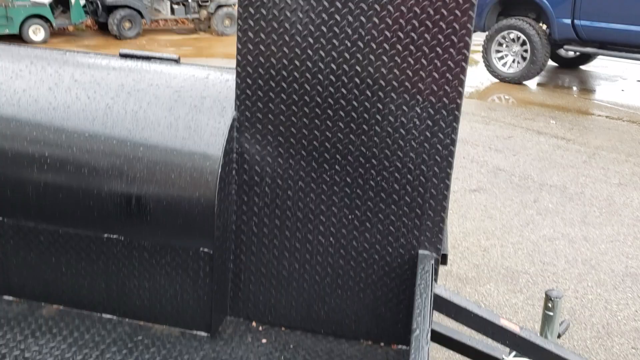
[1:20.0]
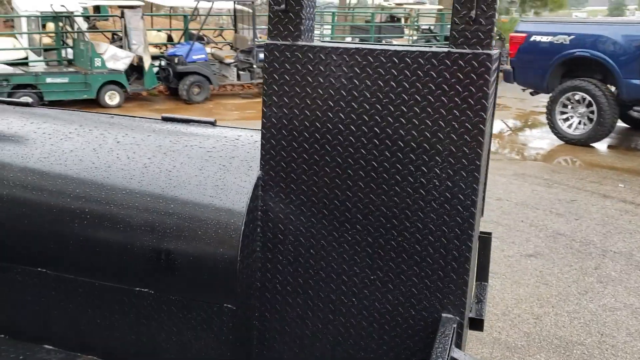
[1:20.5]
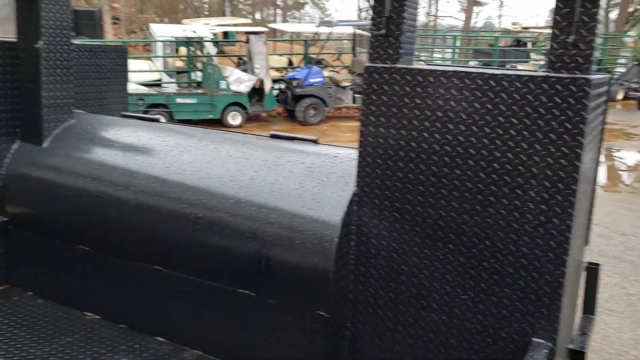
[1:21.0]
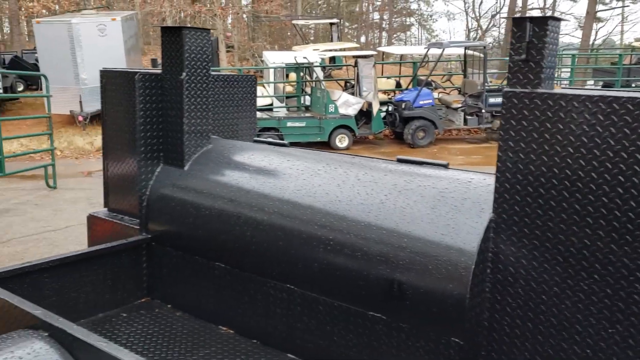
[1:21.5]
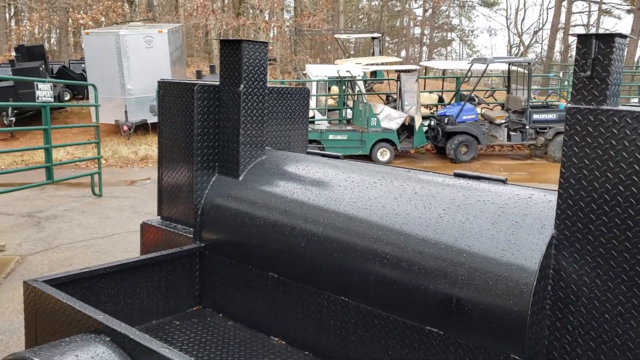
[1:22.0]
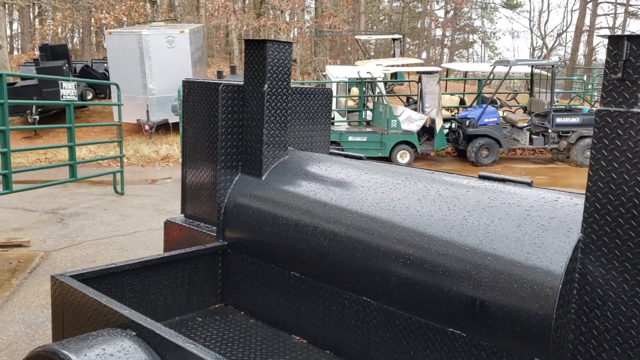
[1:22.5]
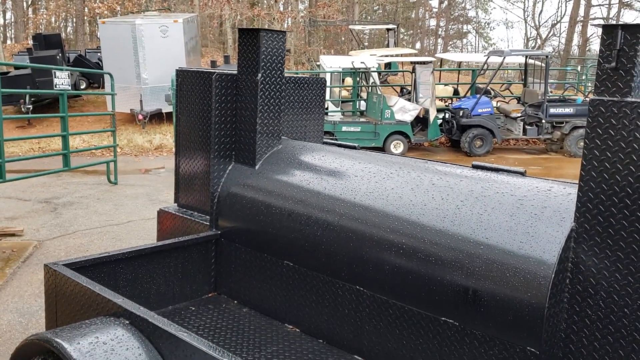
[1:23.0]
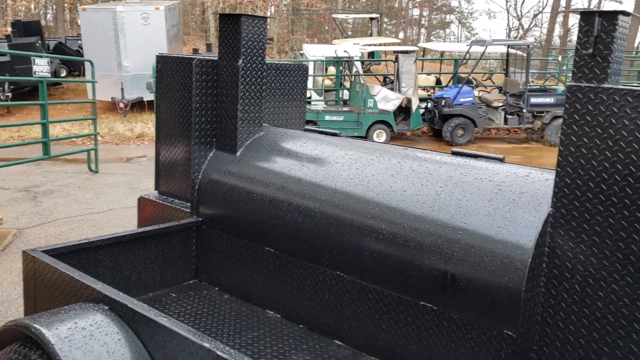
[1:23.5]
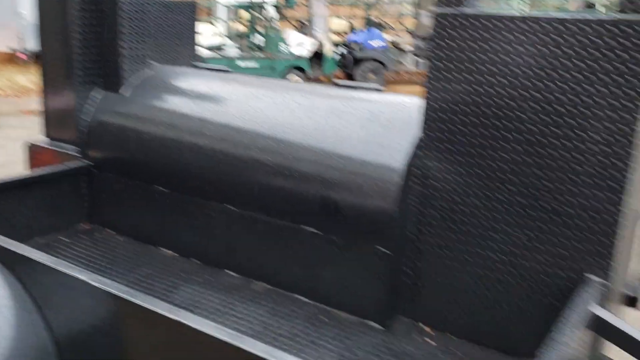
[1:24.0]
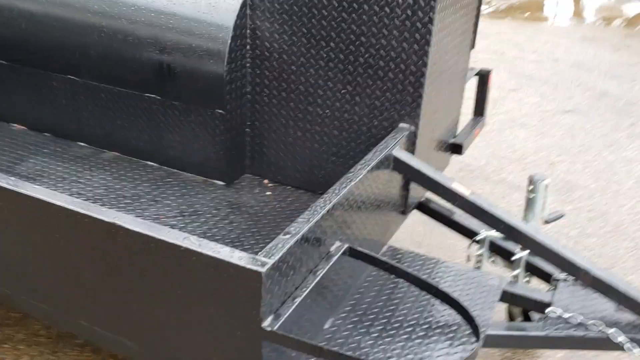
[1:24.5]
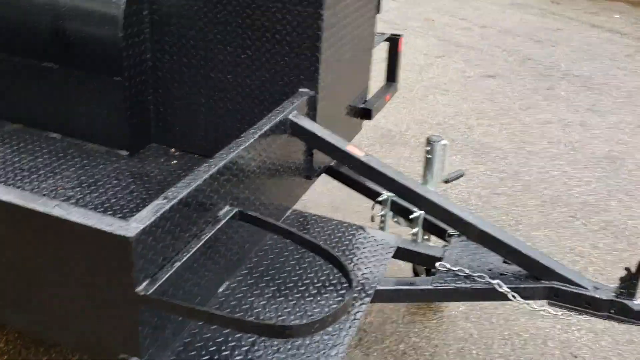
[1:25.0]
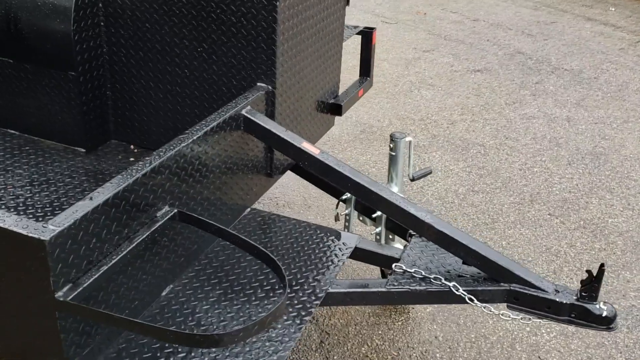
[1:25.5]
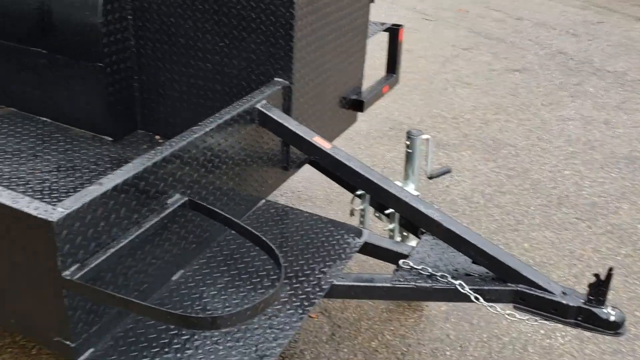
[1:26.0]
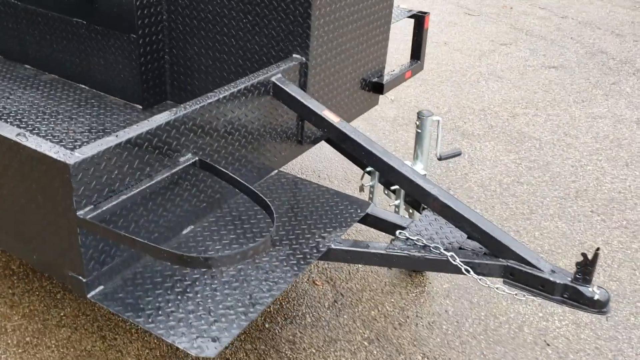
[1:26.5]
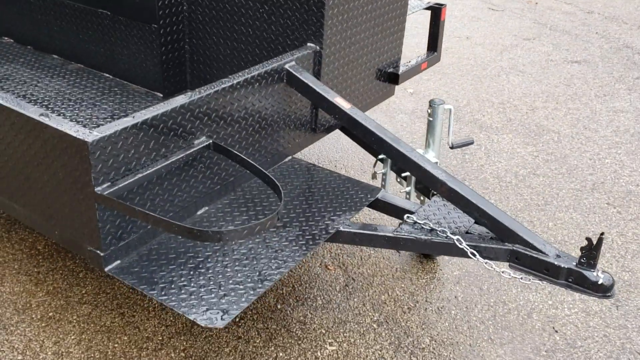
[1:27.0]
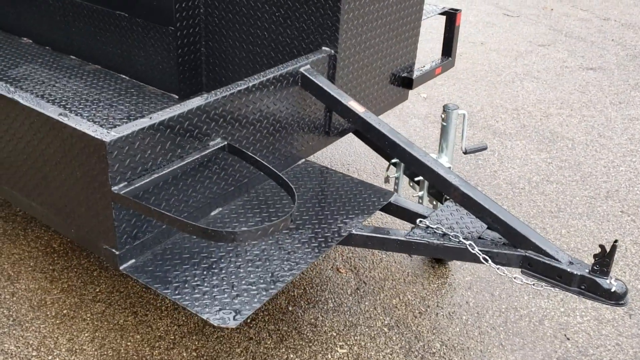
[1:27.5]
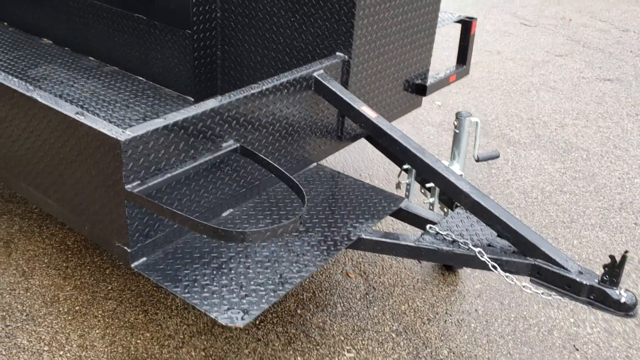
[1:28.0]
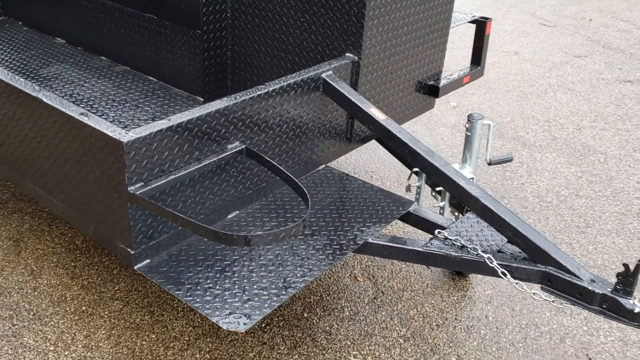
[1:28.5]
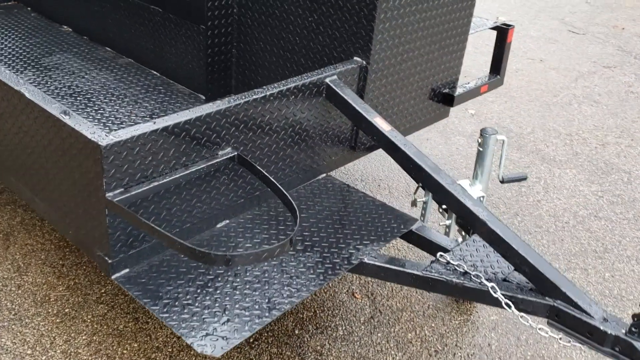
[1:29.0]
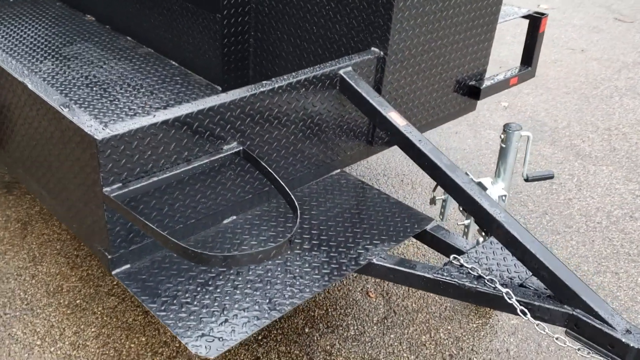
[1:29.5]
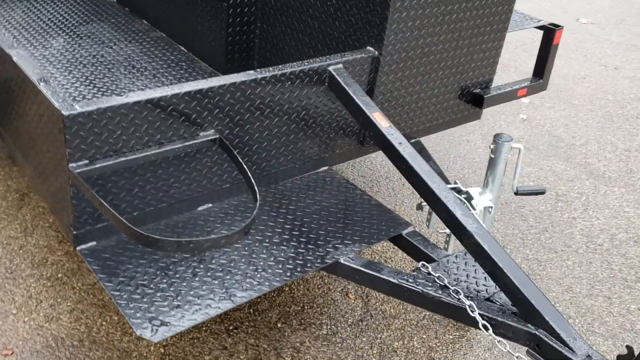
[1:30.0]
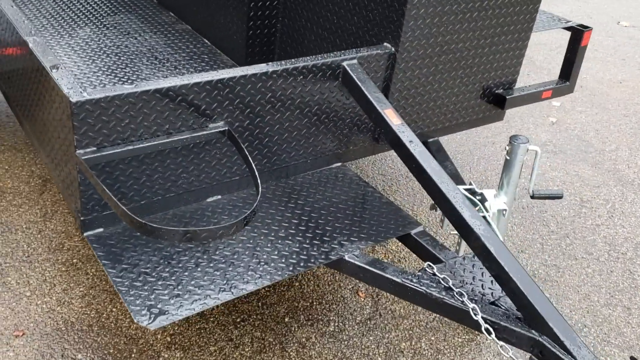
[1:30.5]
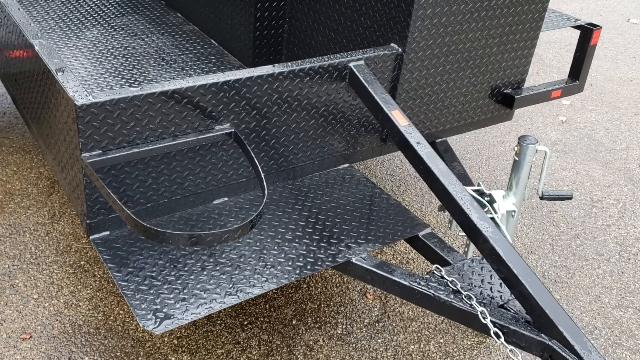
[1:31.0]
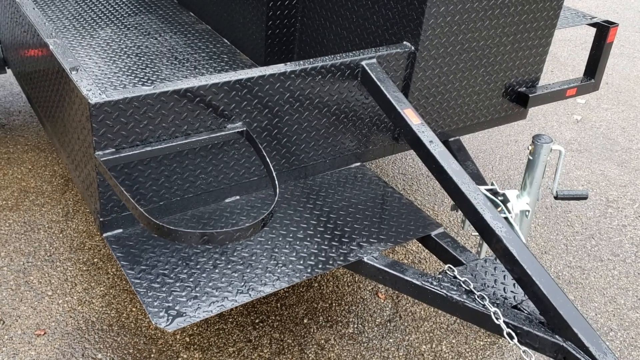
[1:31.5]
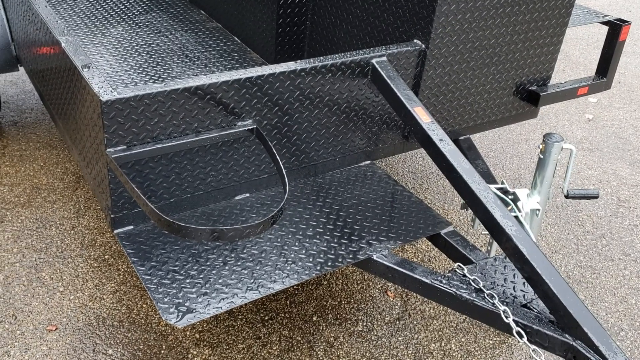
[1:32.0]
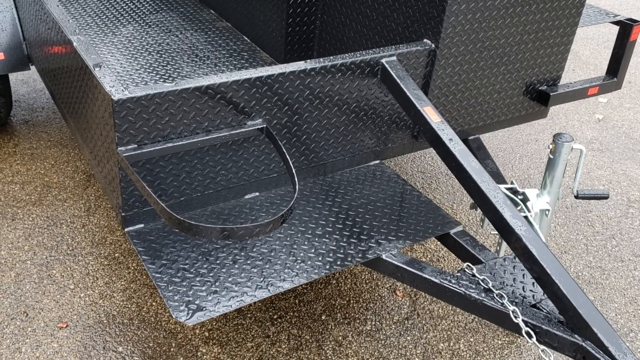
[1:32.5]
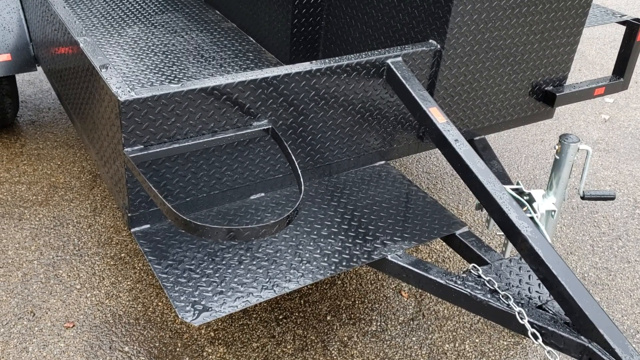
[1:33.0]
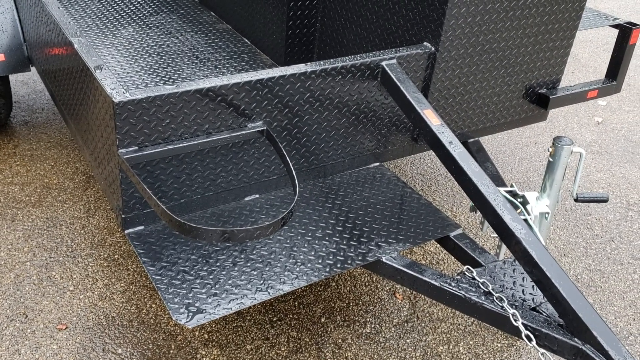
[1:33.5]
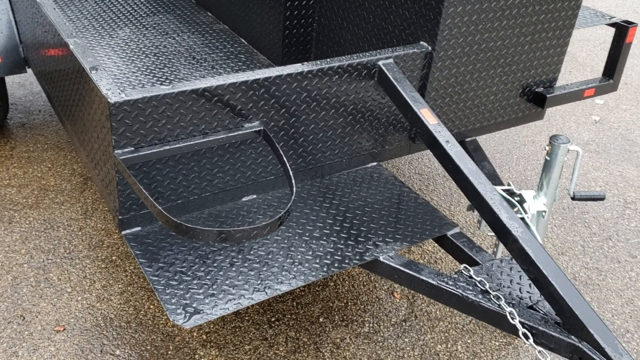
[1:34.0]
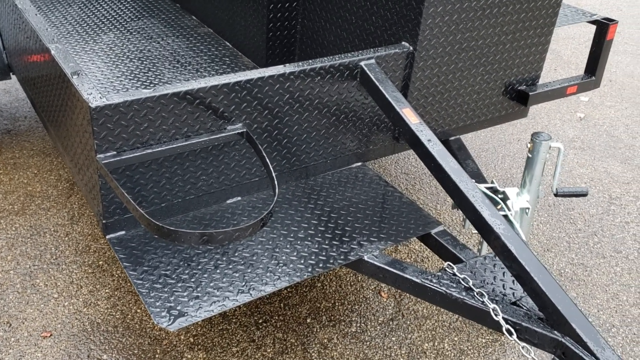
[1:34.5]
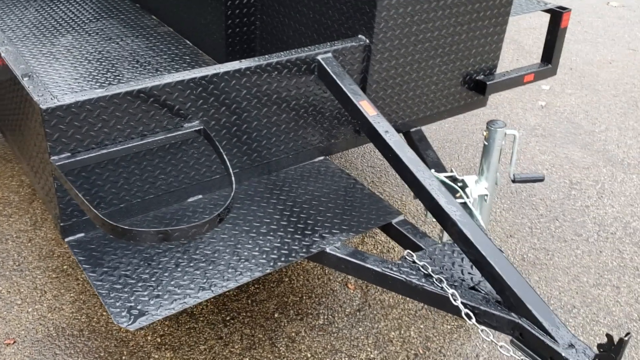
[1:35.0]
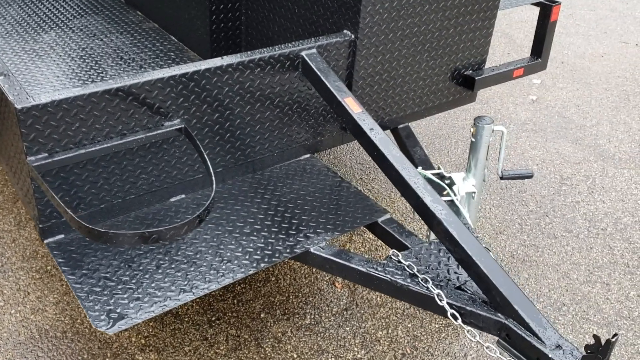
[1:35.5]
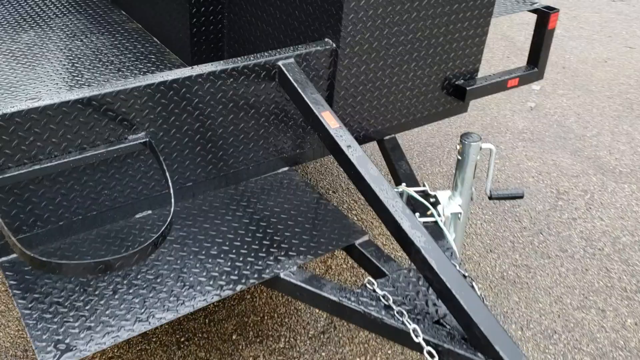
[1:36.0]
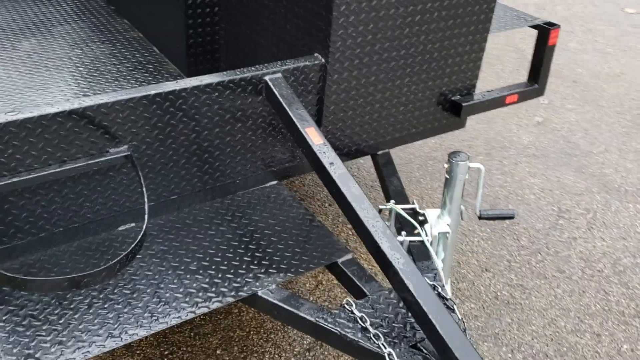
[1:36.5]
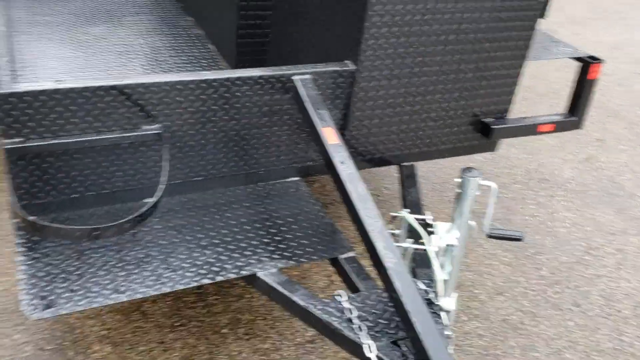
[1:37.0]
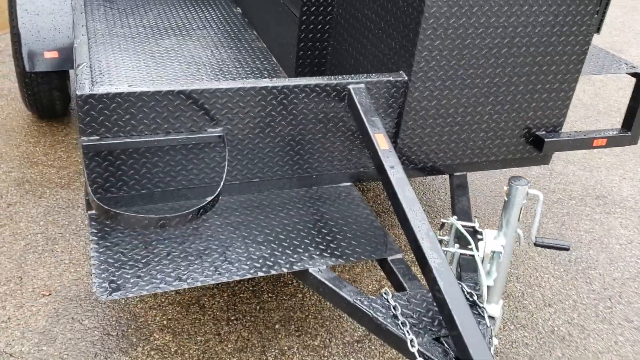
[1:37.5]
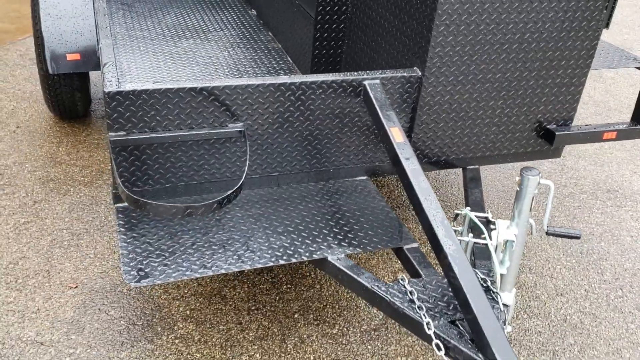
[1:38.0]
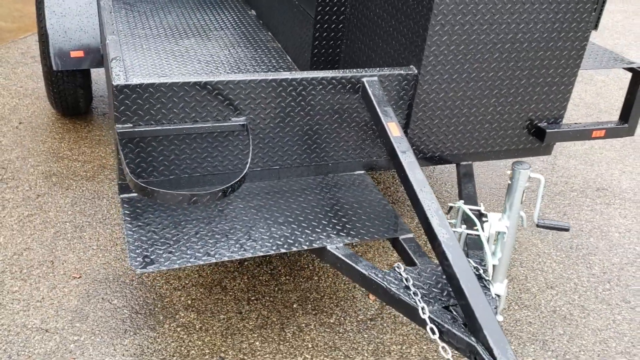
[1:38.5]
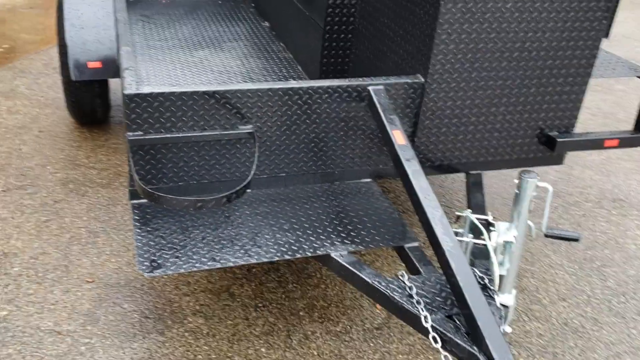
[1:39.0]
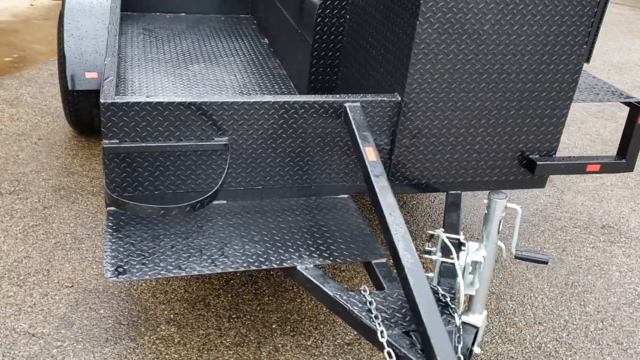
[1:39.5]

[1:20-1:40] A black two-wheeled trailer that looks like a braai stand stands outside, along with two white golf cars. Other golf cars stand farther off, one blue and one white. The black trailer has a red light and the space. There is a blue van, and green and blue golf cars stand far away from the black trailer. A chain is on top of the trailer, and there is a green gate. No people are visible. There are big trees at the back, behind the golf cars. The place is wet, with water on the ground, and there is something gray that looks like a cooler or freezer.